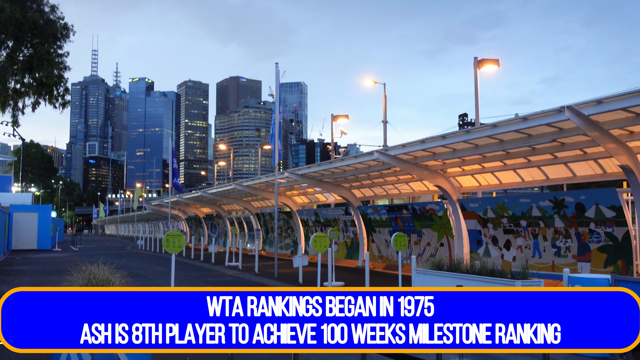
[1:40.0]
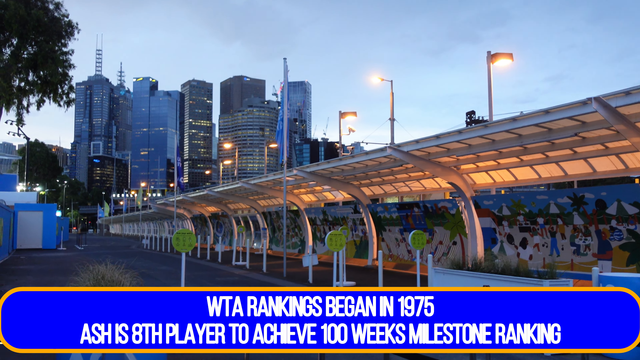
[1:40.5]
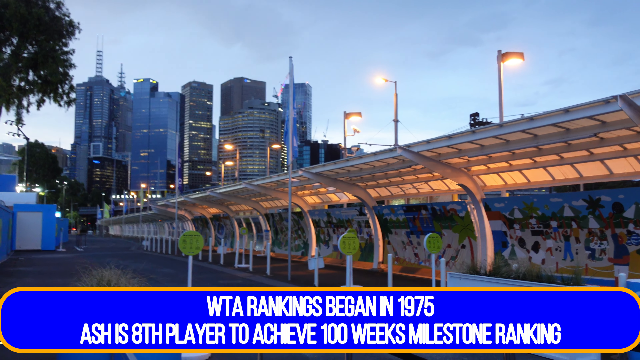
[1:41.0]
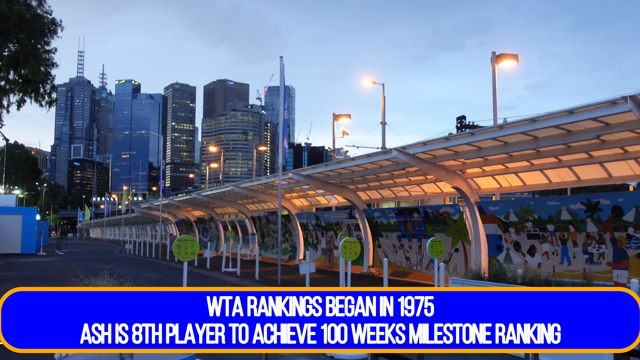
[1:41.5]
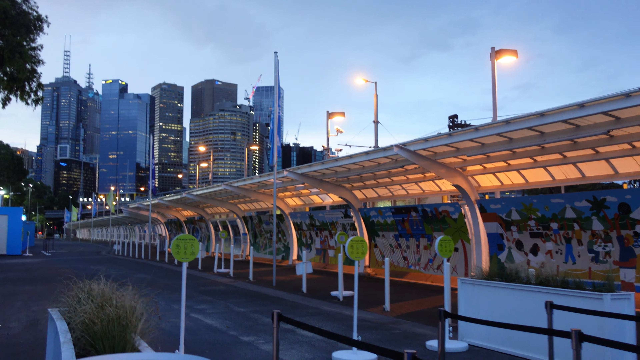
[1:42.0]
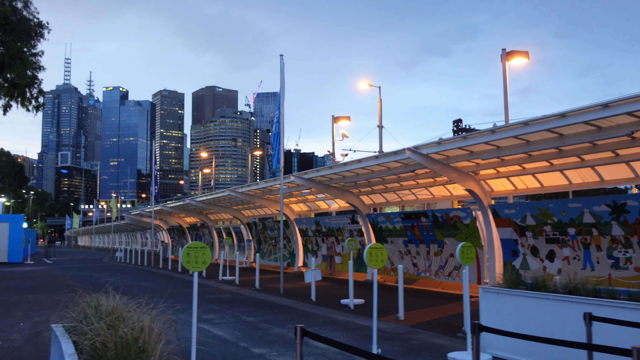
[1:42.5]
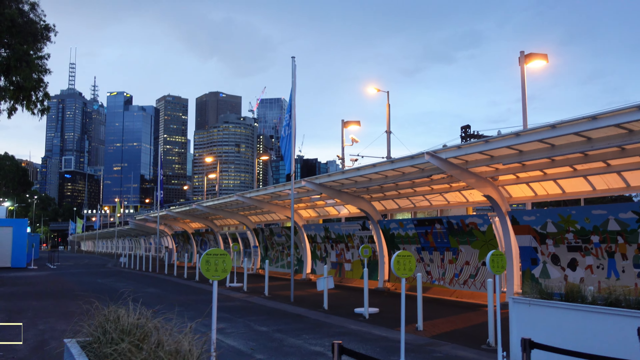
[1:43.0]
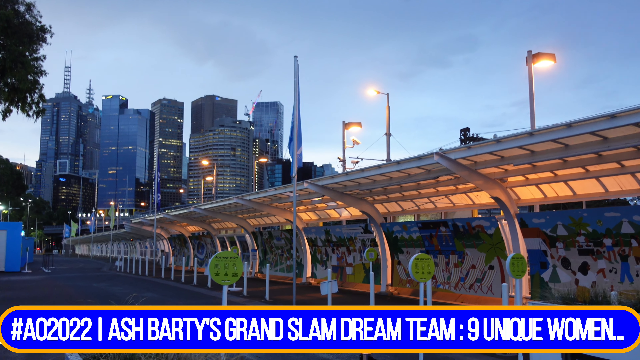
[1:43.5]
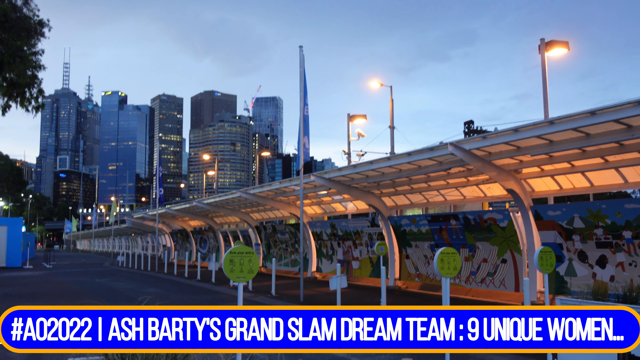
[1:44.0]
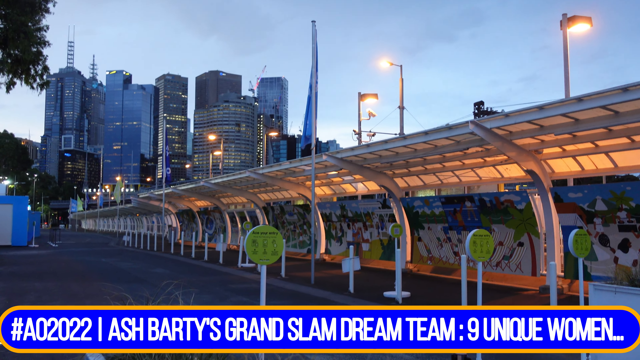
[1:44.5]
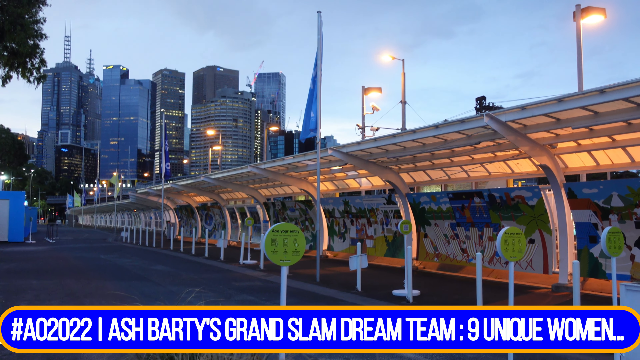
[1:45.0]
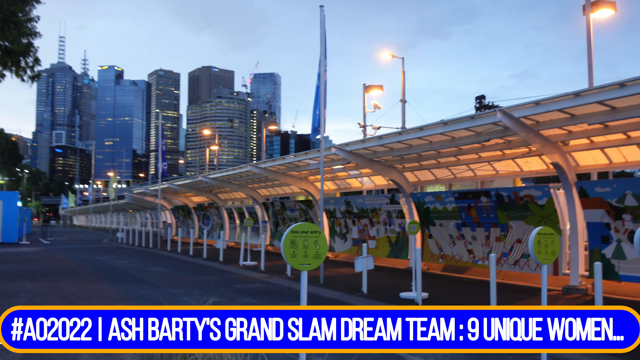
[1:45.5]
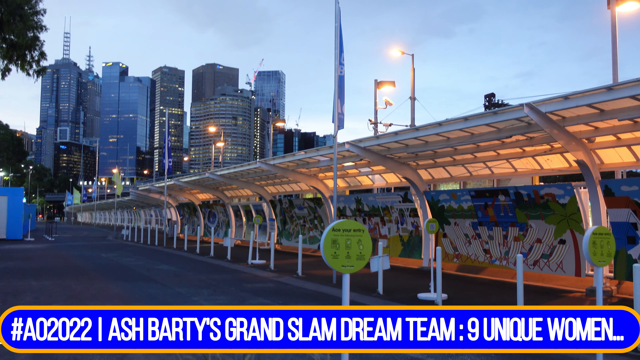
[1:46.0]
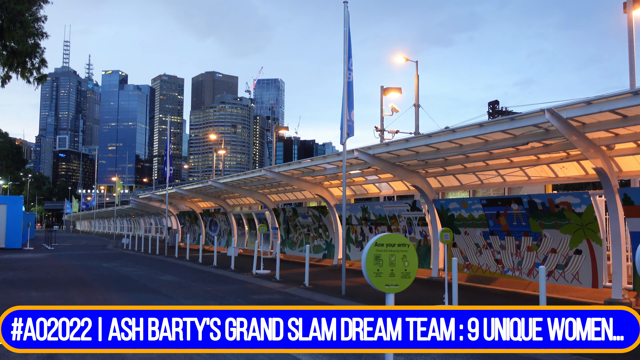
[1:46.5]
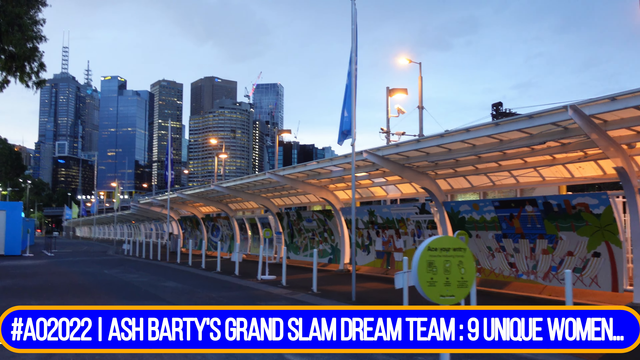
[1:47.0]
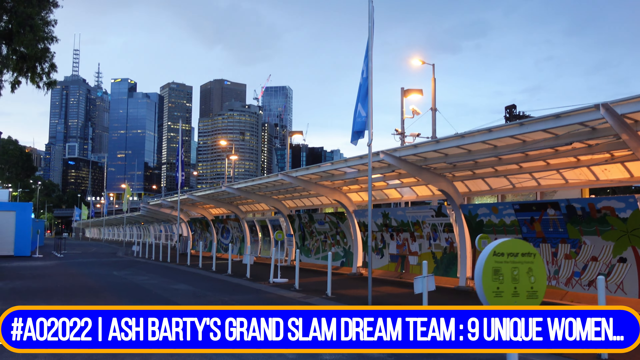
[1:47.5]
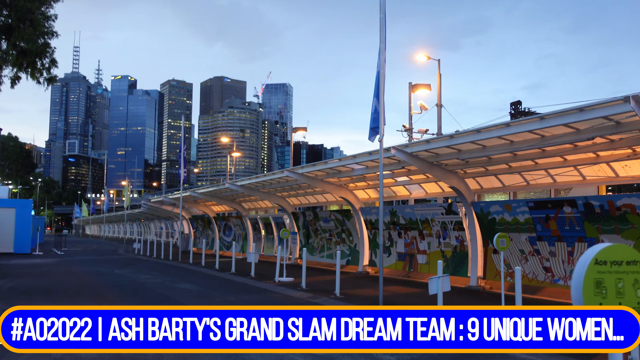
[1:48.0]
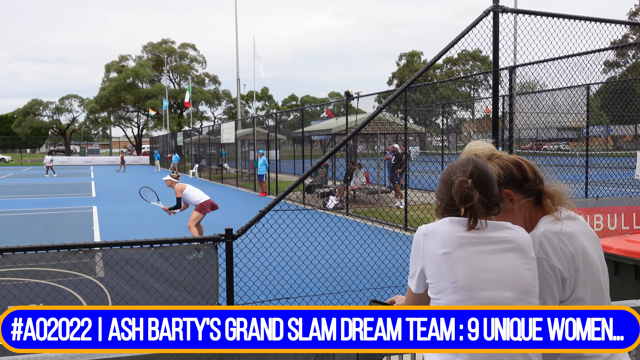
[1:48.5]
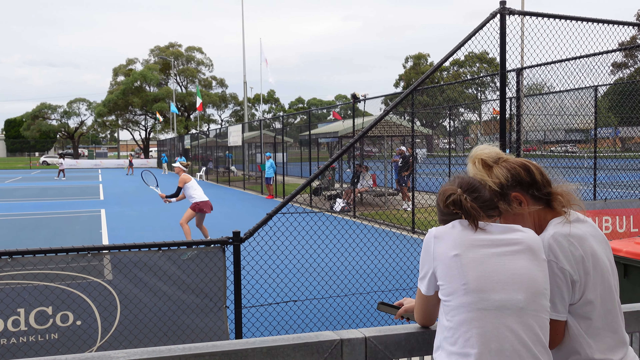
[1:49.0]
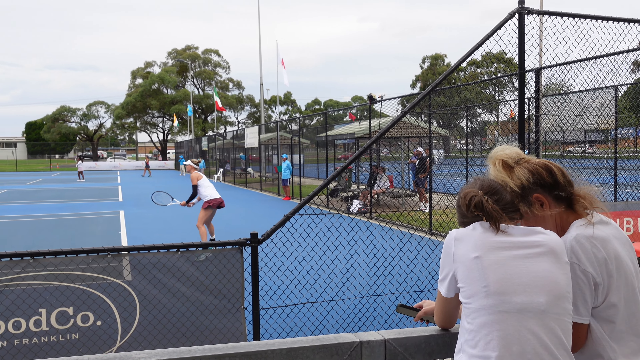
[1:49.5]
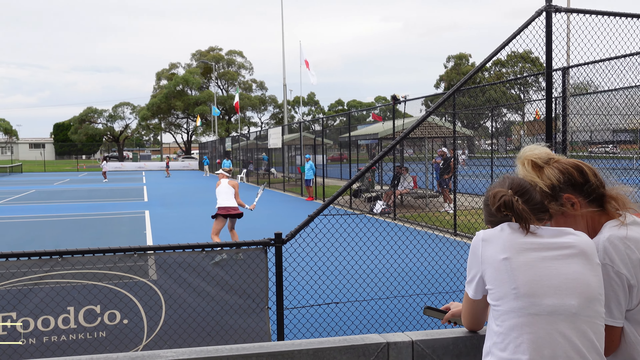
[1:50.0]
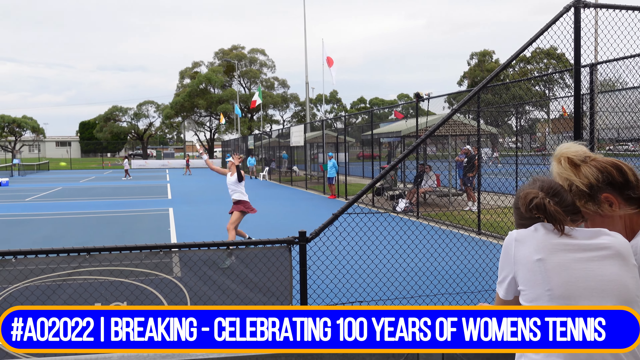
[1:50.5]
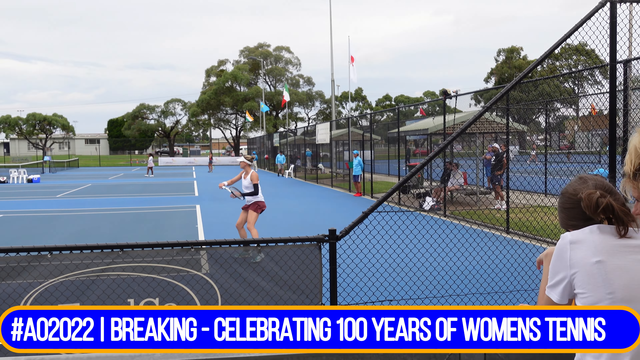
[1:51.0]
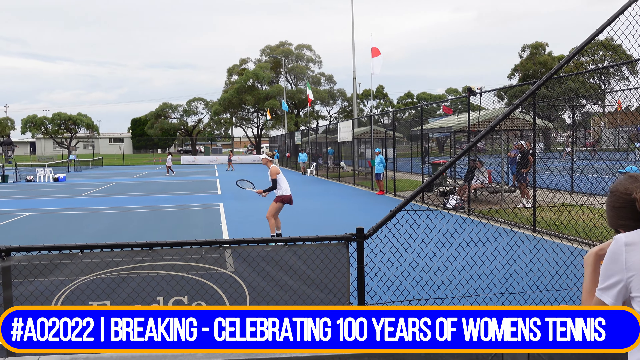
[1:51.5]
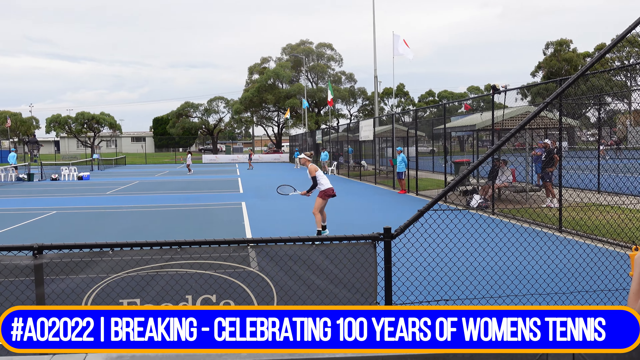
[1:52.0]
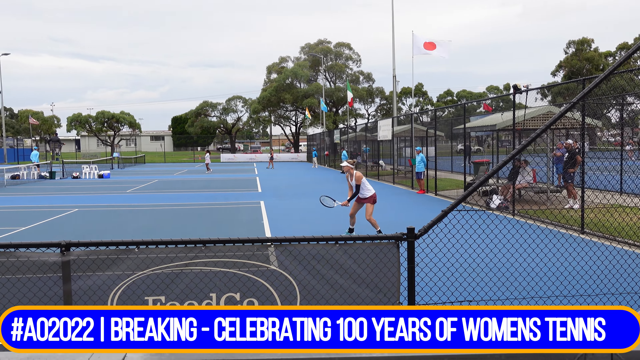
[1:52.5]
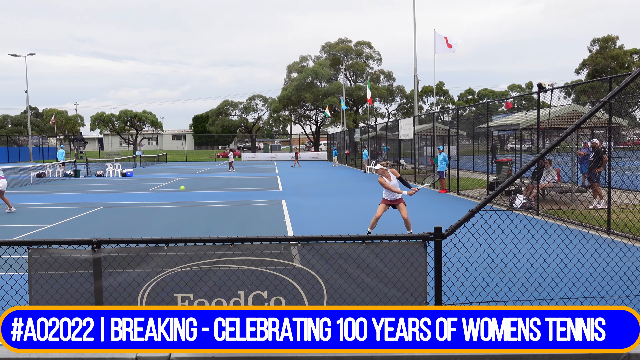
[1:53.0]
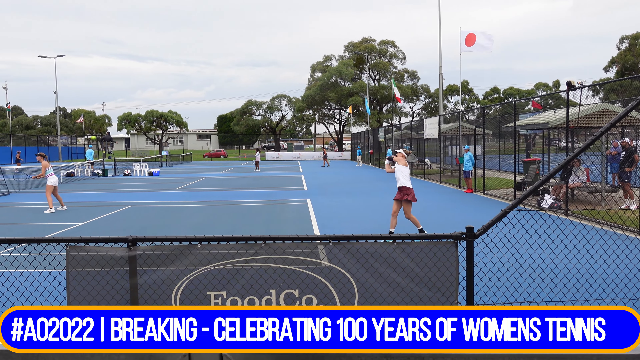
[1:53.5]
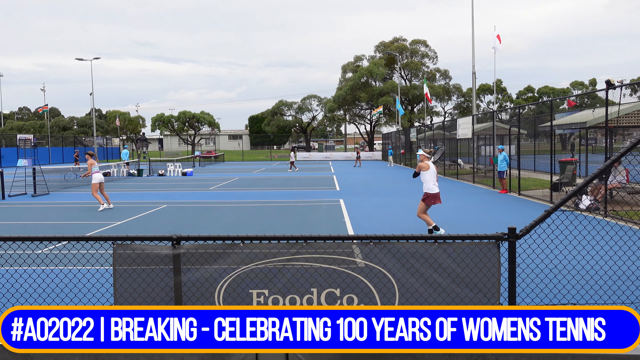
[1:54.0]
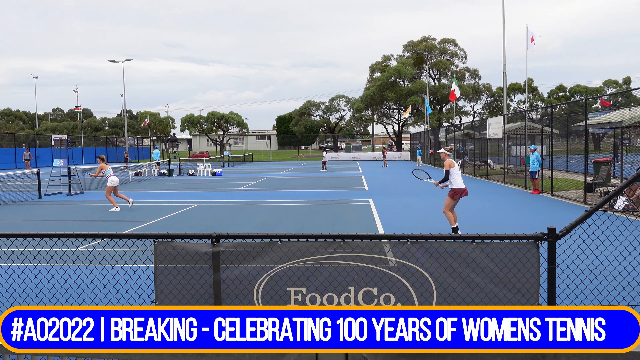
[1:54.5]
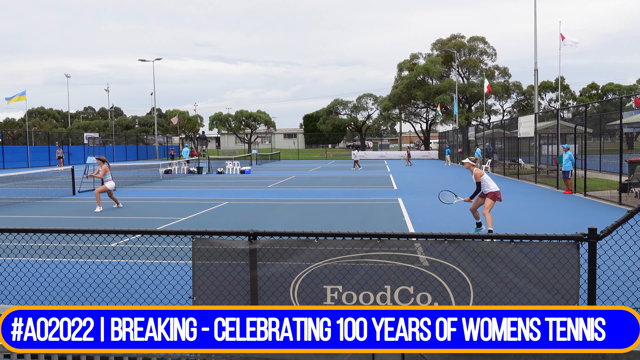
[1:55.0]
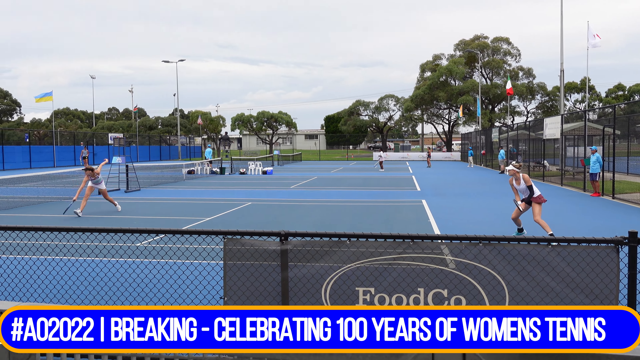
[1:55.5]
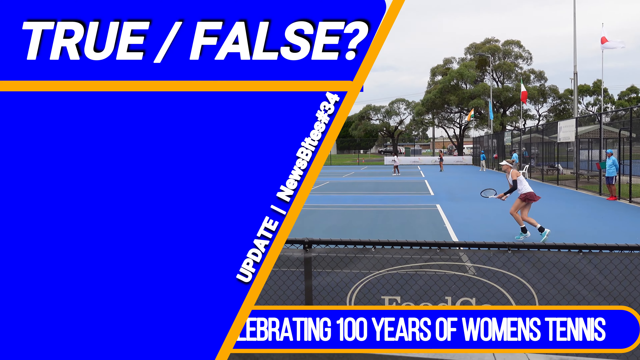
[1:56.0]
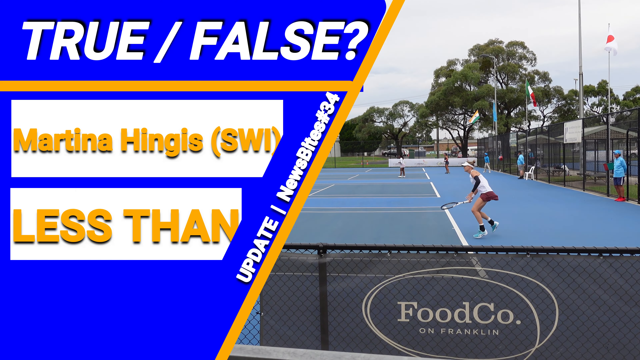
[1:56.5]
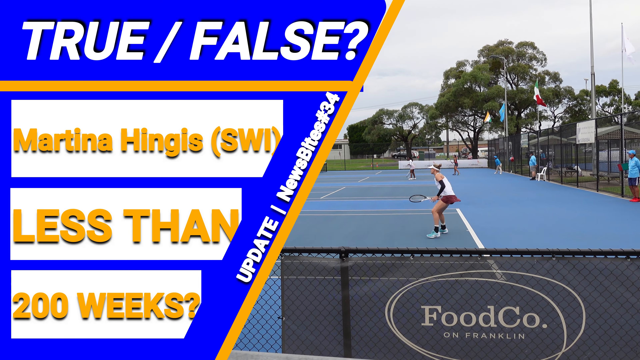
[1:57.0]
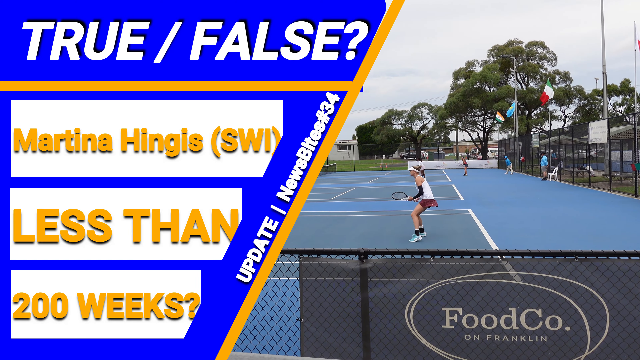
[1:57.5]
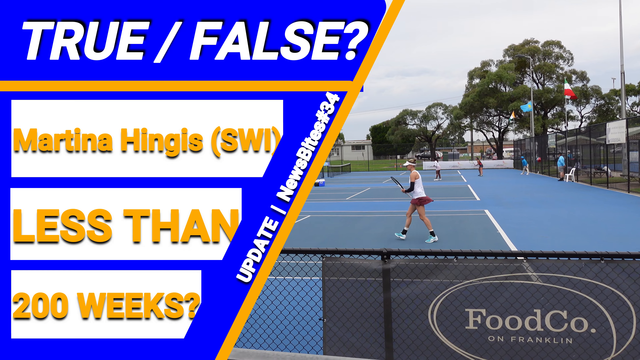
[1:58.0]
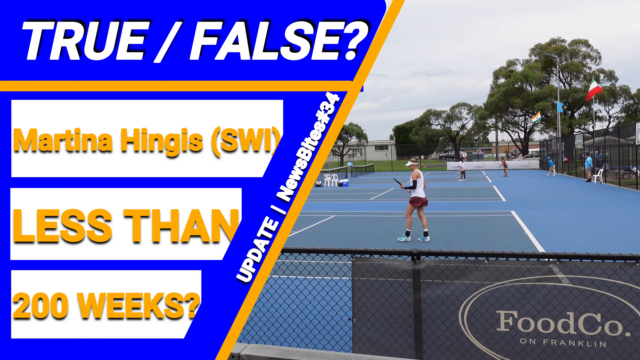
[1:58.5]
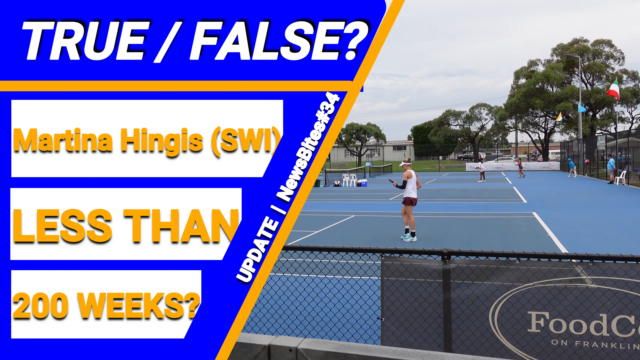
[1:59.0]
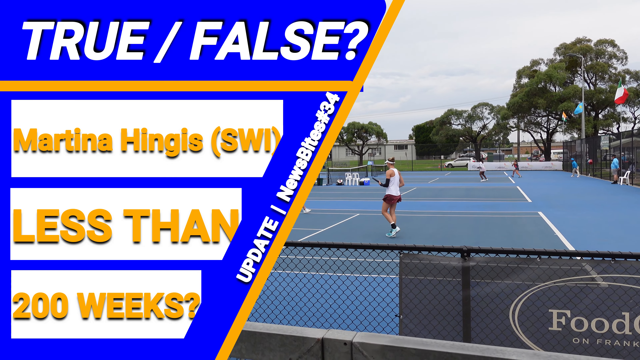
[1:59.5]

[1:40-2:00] A banner at the bottom reads "WTA rankings, Ash Barty's Grand Slam dream team, nine unique women". The video cuts to a tennis court where people are playing a doubles game: a woman with a hat and tennis clothes is hitting, and two other women are visible. There are two other courts; one is empty and the middle court is filled. What seems to be an umpire or somebody sits on a chair on the right-hand side, watching the game, and another umpire is at the last court. There are a few flags, maybe for the different participating countries. It seems to be a park area, all outdoors. Text in the left-hand corner reads "True or false? Martina Hingis, SWI, less than 200 weeks?", and it is listed as "update news bites number 34". The outdoor extensions and the line where people would enter the event are also shown. No crowd is visible.